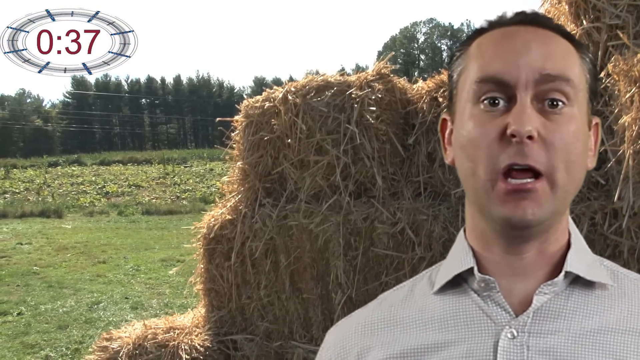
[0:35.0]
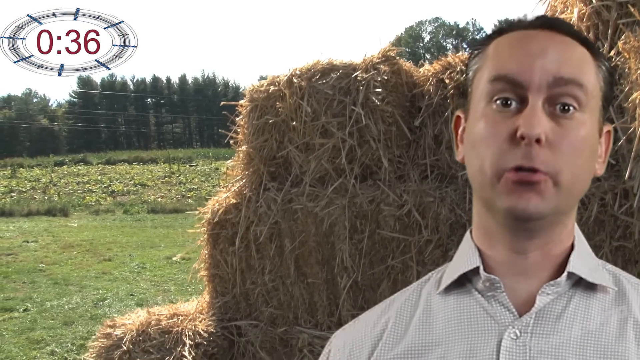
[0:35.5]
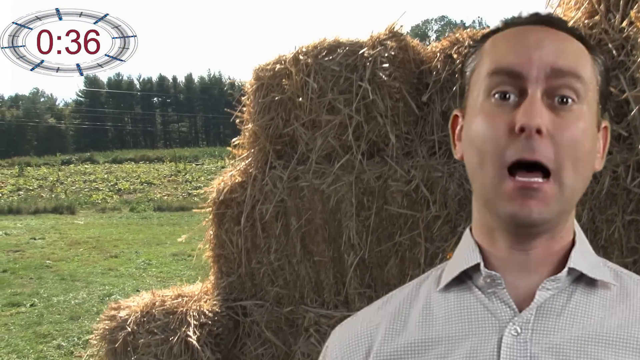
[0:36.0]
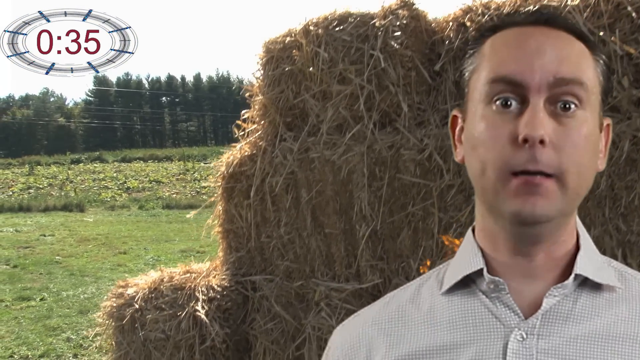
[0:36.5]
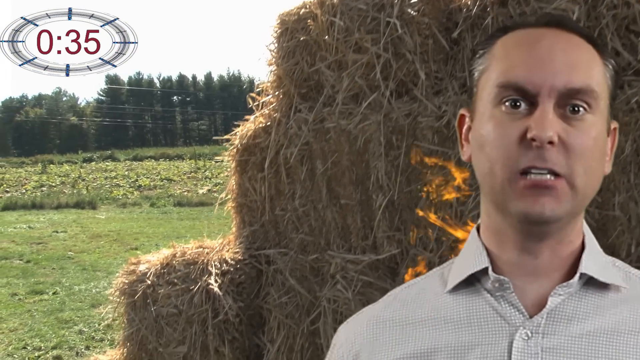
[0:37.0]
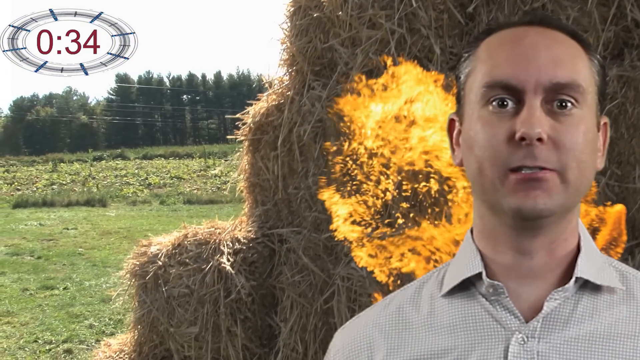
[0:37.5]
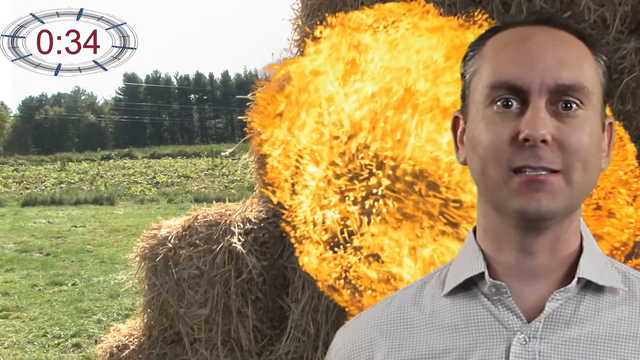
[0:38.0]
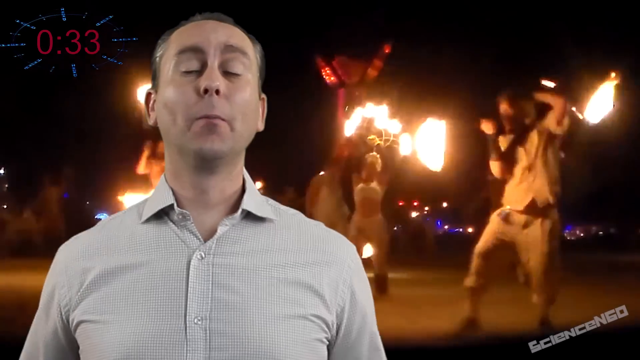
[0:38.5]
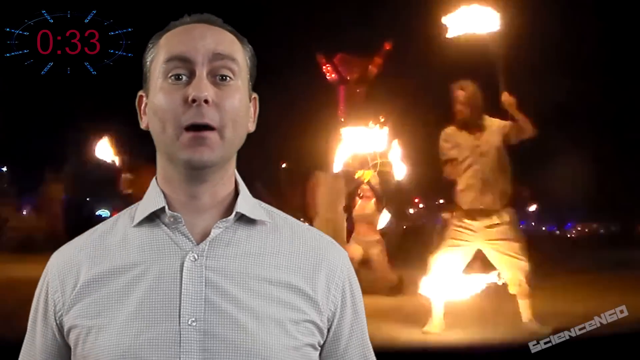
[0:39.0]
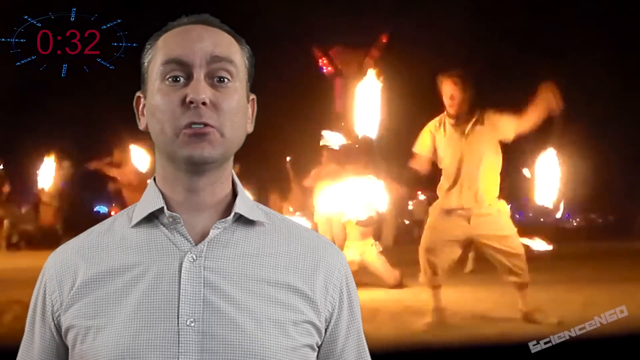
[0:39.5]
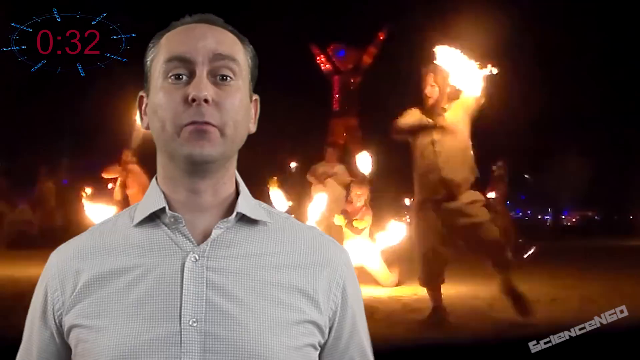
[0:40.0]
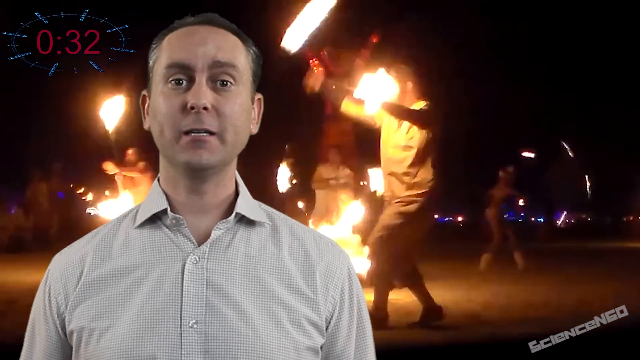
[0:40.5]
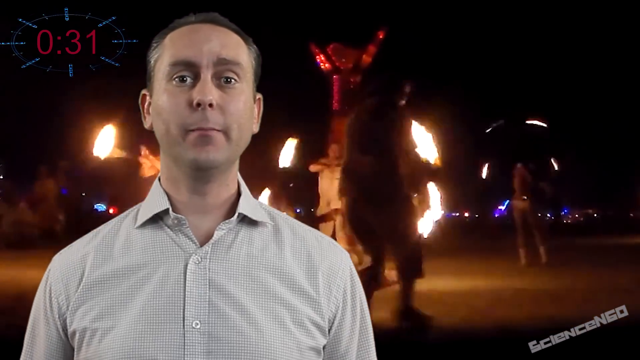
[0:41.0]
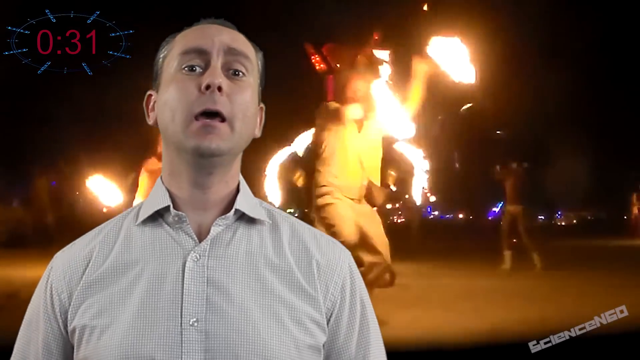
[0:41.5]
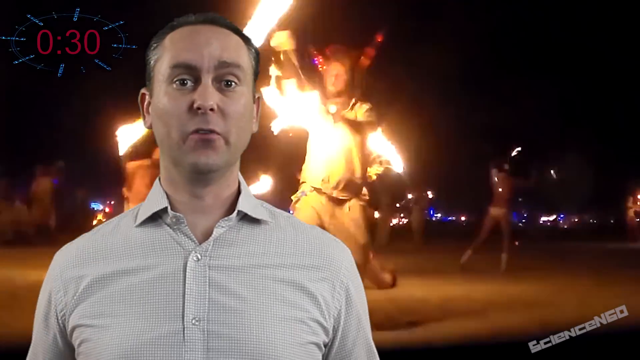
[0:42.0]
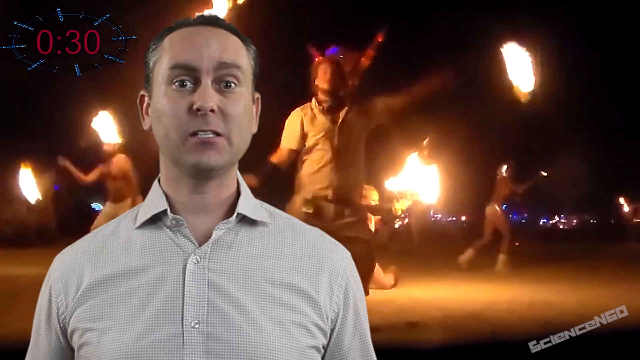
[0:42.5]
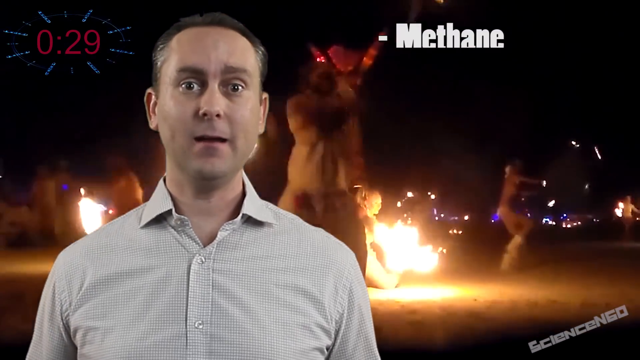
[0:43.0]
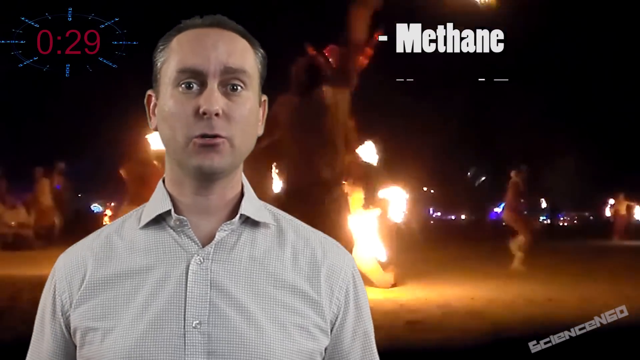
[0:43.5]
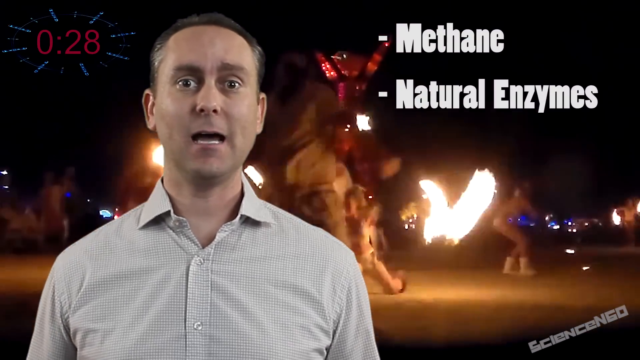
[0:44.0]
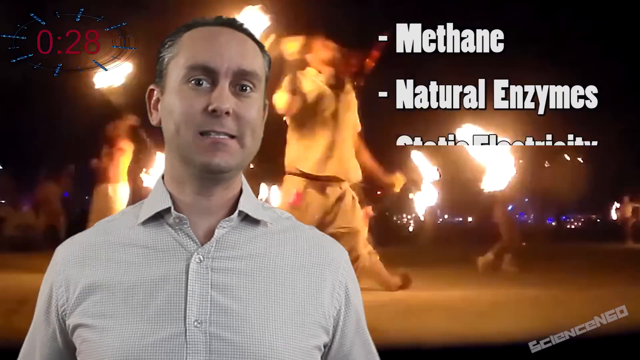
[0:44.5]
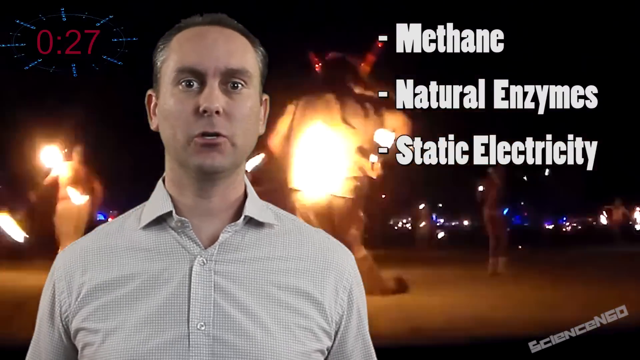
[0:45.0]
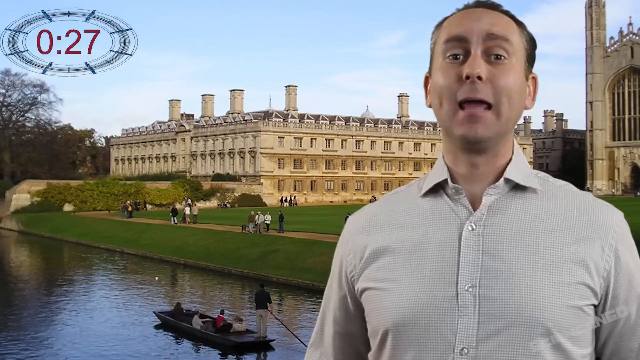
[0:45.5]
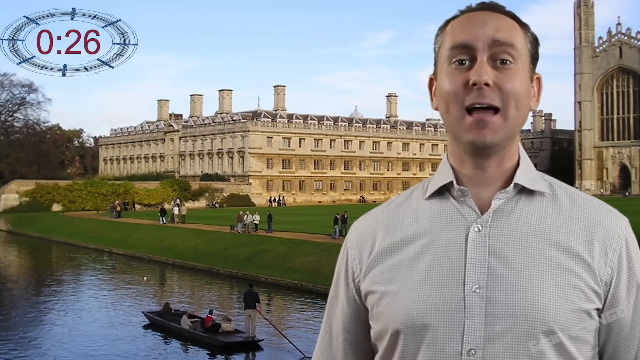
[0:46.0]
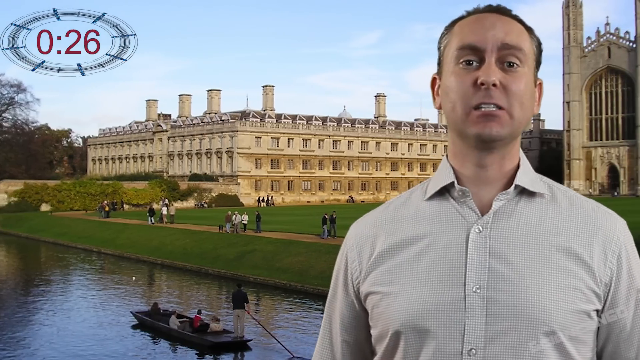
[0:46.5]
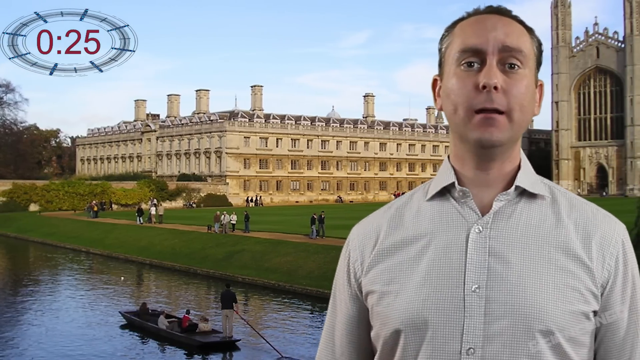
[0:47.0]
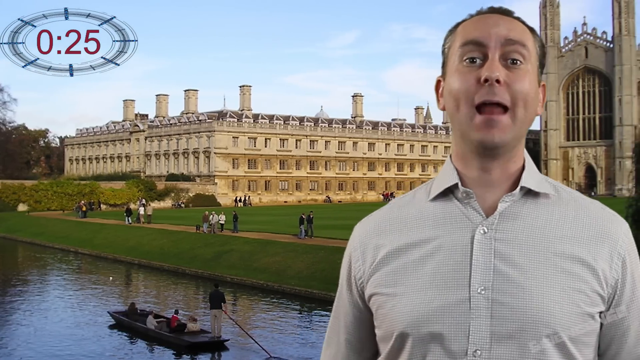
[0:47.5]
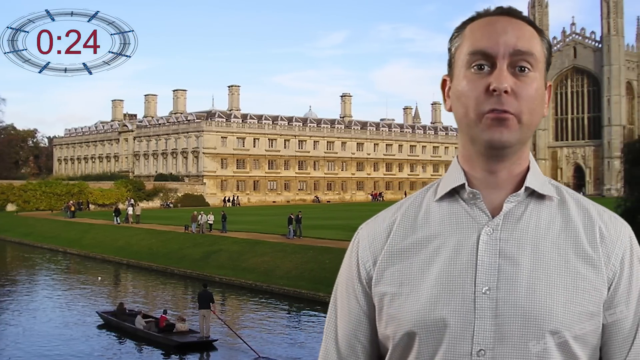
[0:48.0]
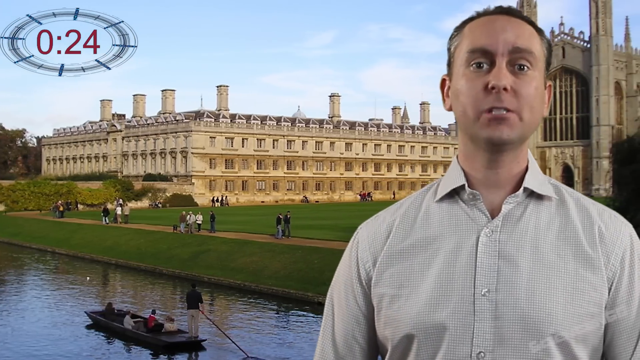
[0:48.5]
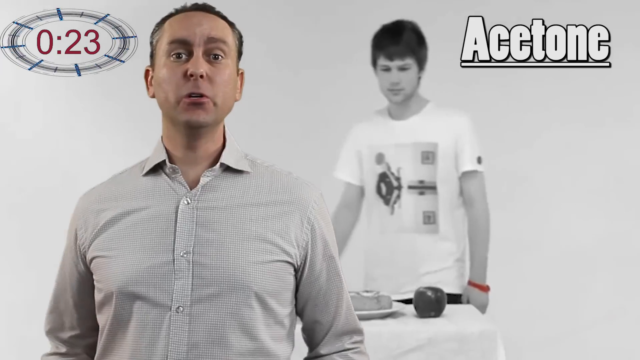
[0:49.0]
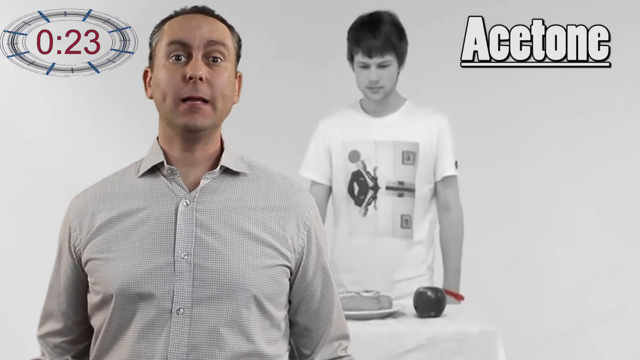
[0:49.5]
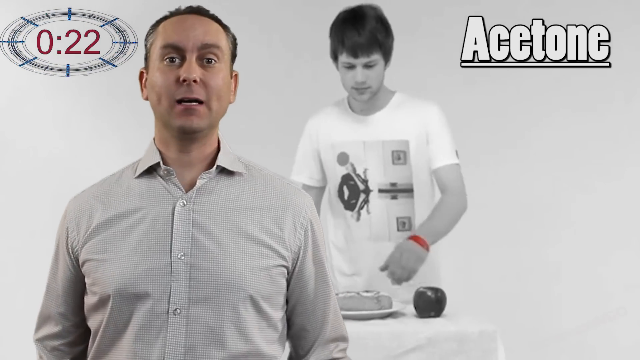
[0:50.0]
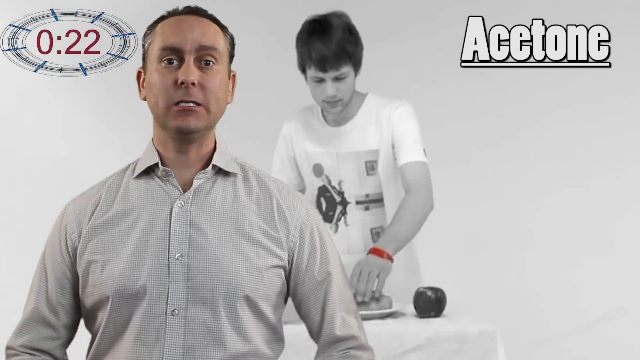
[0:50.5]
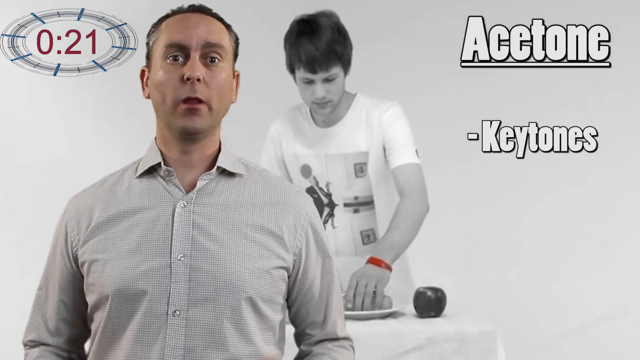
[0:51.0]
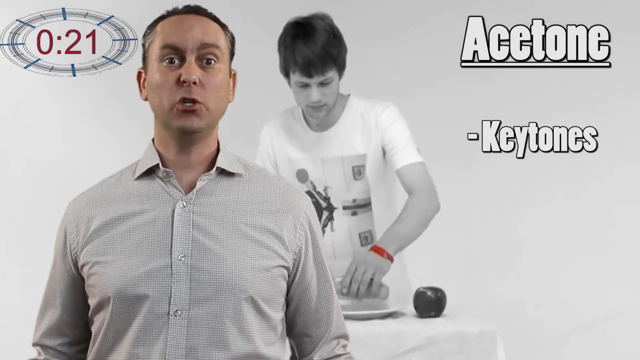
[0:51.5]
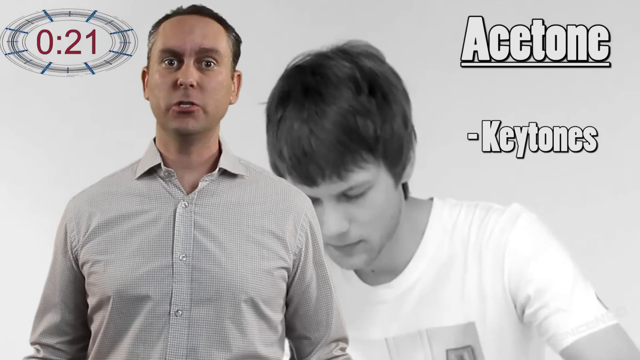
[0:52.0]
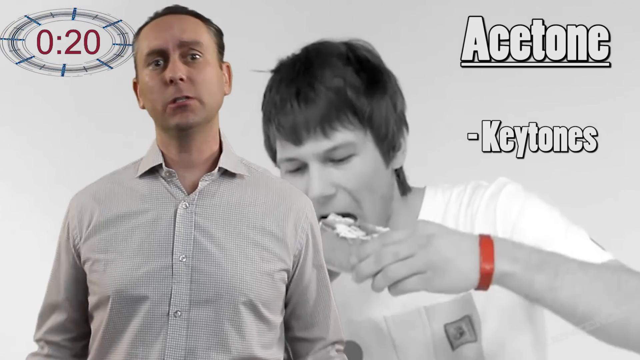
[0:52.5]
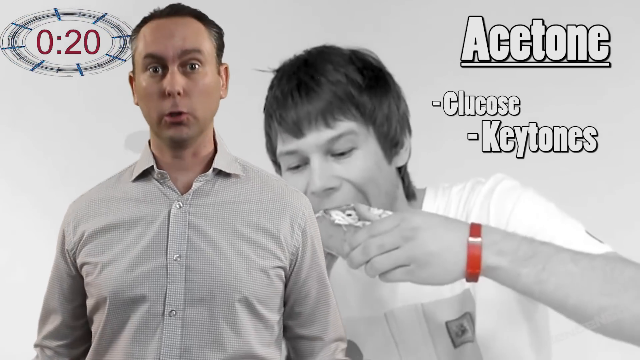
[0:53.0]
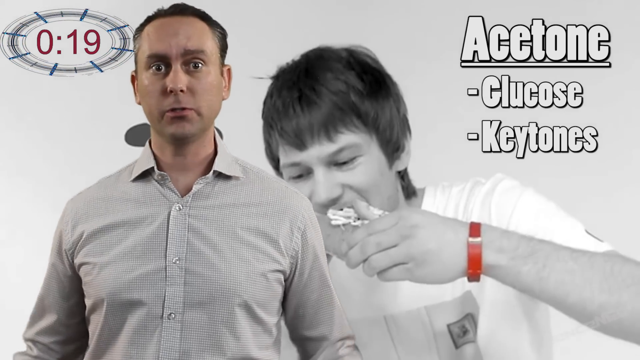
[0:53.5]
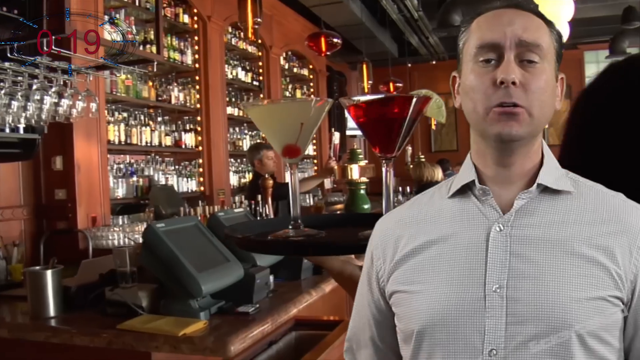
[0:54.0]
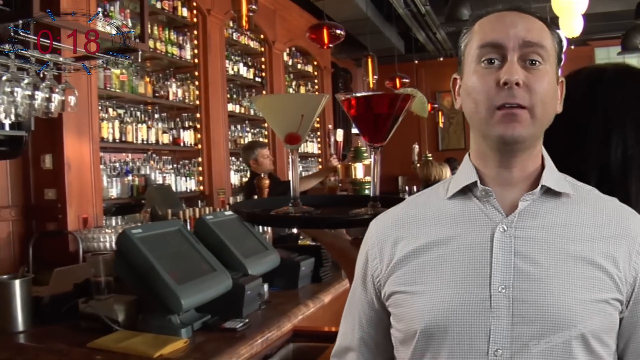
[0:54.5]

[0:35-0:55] Hay is shown, and the hay starts on fire spontaneously. The man is still talking. The words acetone and glucose appear, and there are images of men twirling fire in what looks like a dance activity. Static electricity is mentioned, and so are ketones. The video also shows a bar where alcoholic drinks are being served. The images move very fast.